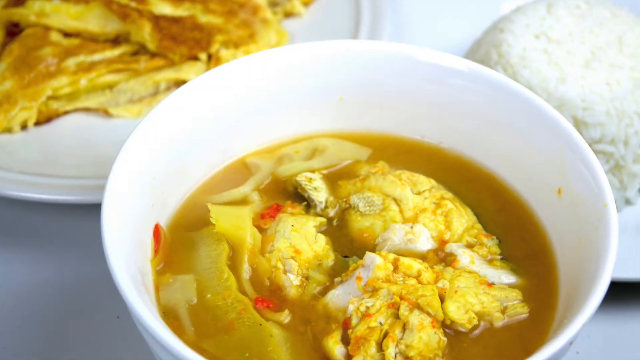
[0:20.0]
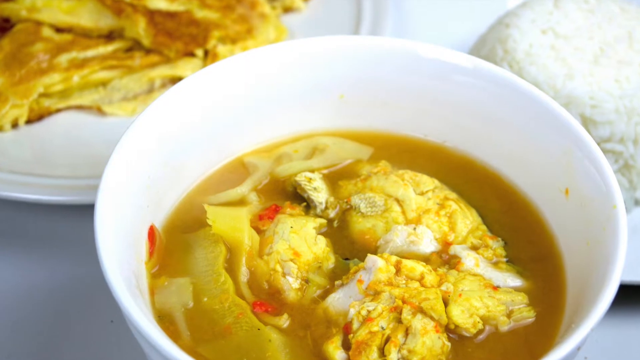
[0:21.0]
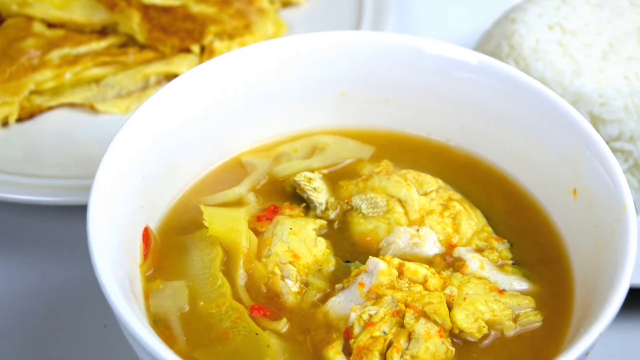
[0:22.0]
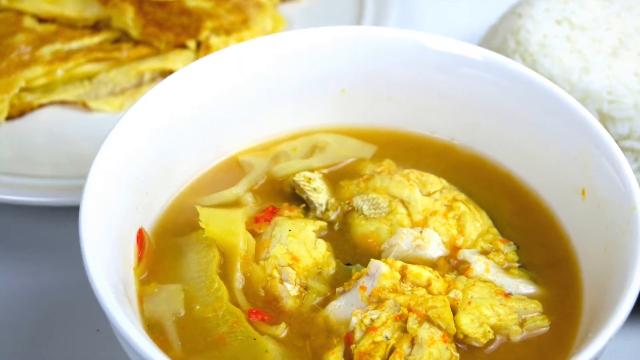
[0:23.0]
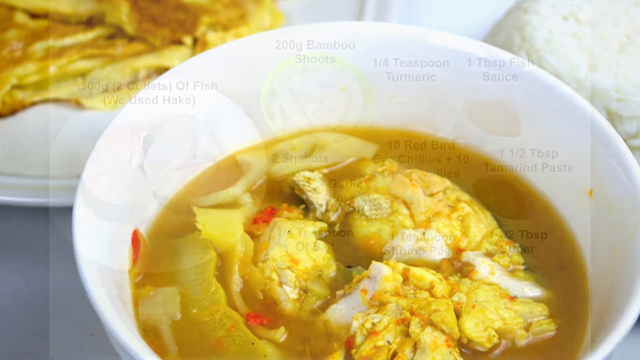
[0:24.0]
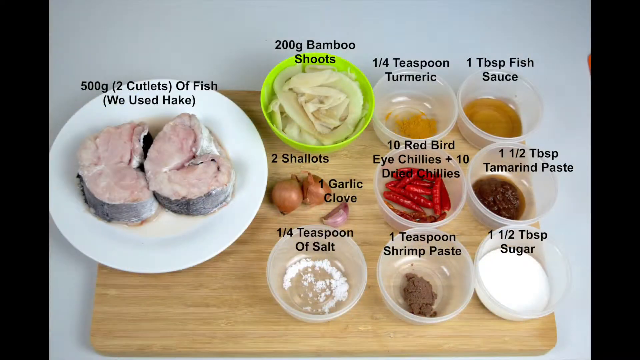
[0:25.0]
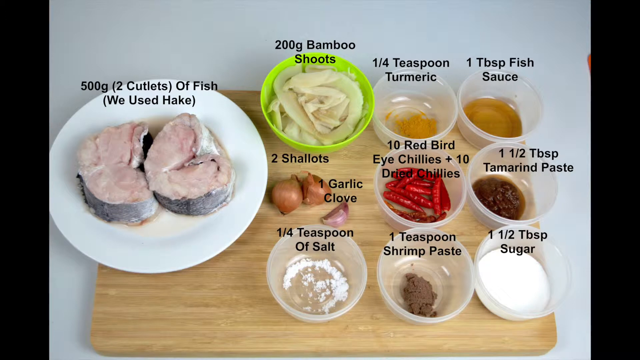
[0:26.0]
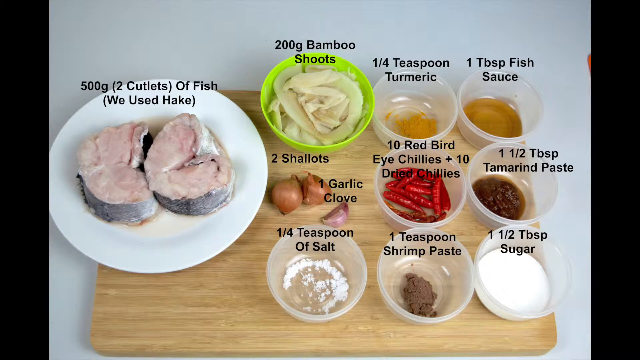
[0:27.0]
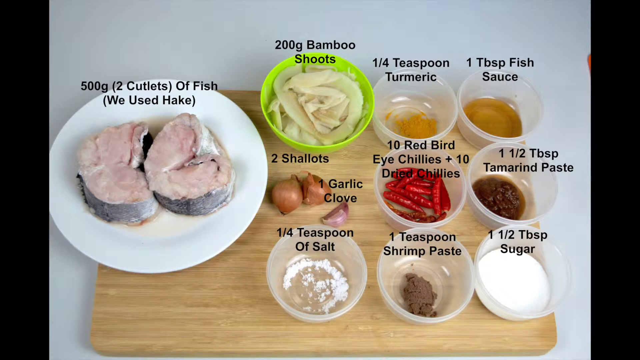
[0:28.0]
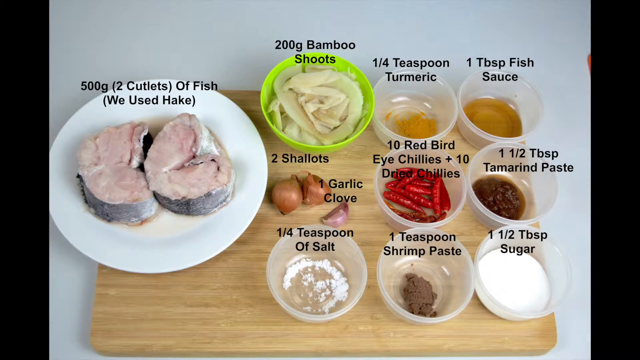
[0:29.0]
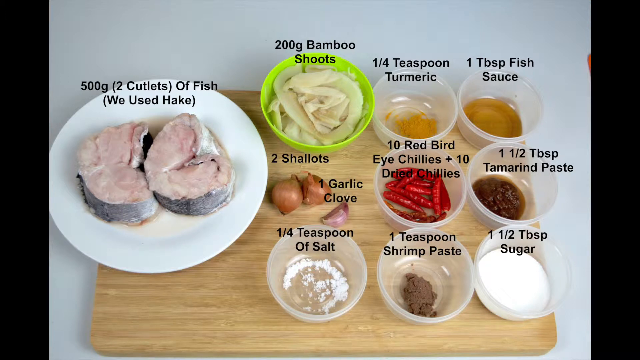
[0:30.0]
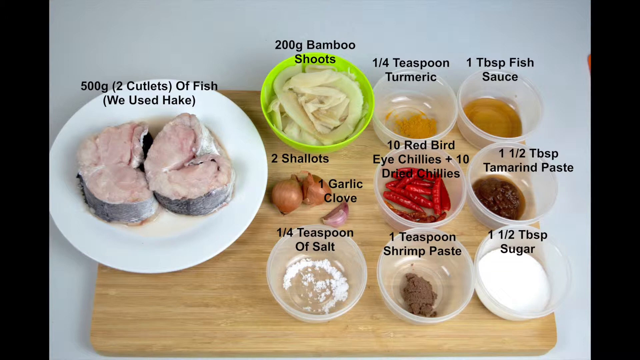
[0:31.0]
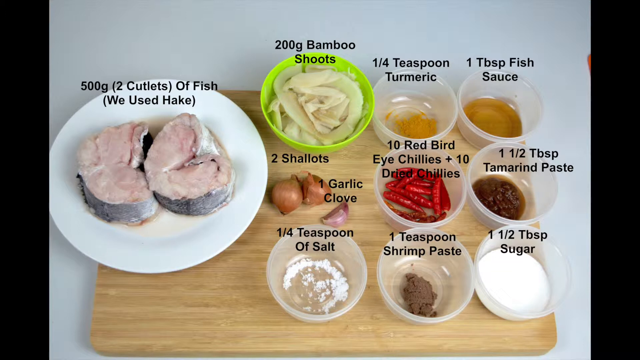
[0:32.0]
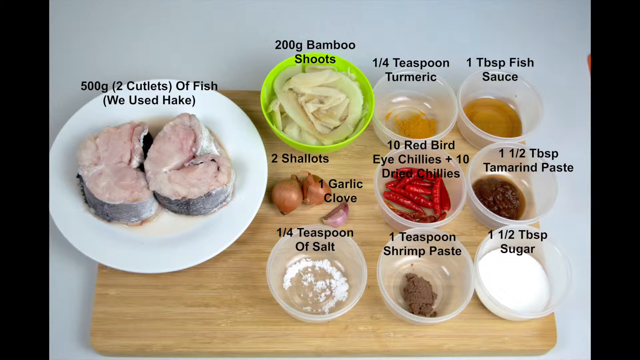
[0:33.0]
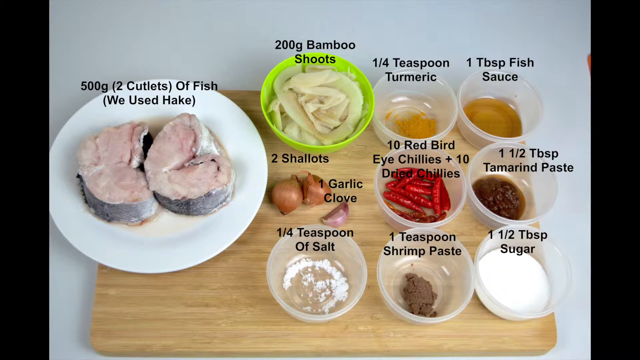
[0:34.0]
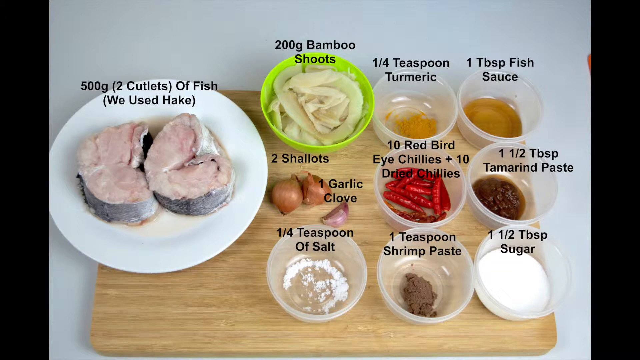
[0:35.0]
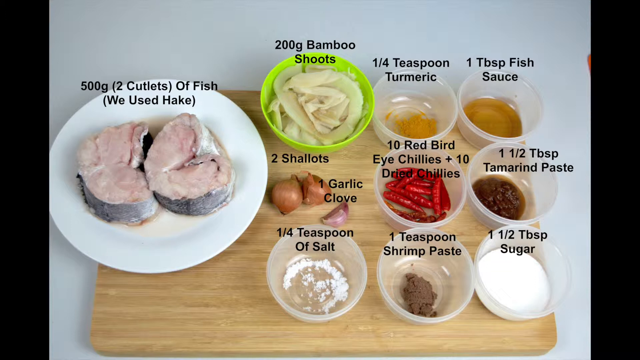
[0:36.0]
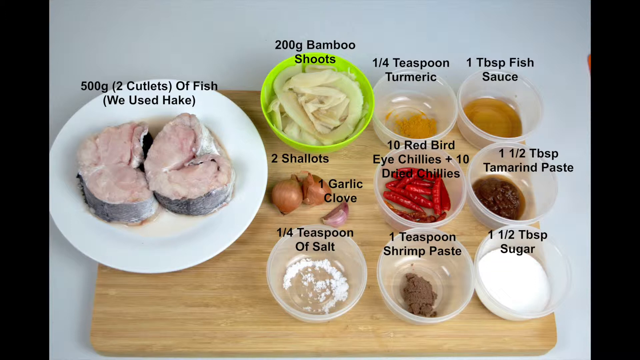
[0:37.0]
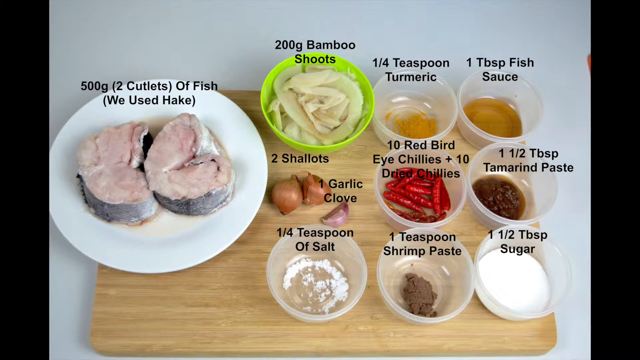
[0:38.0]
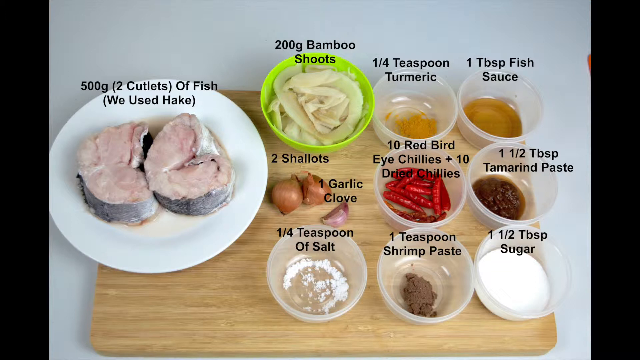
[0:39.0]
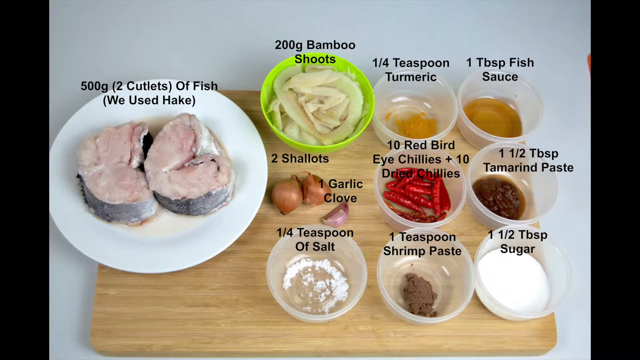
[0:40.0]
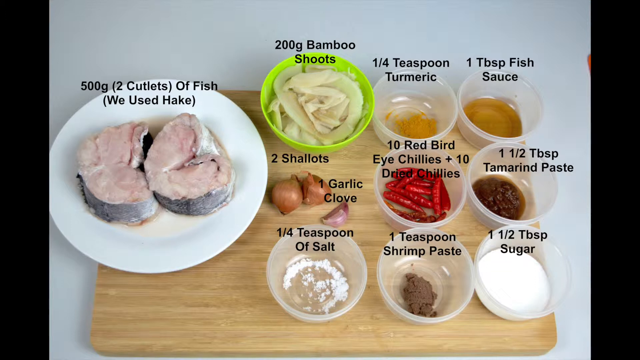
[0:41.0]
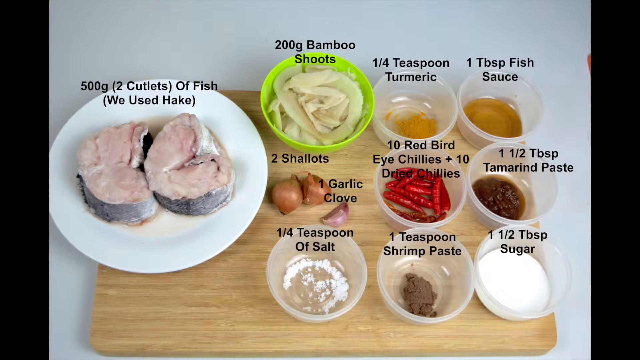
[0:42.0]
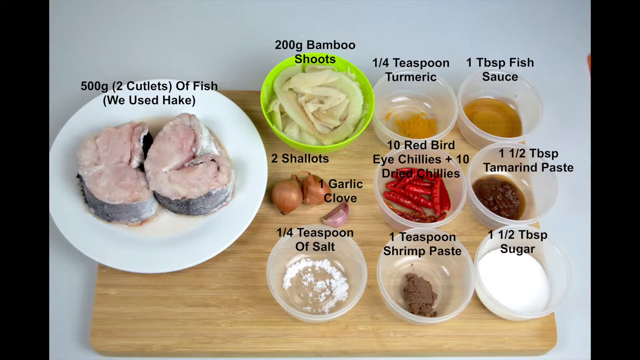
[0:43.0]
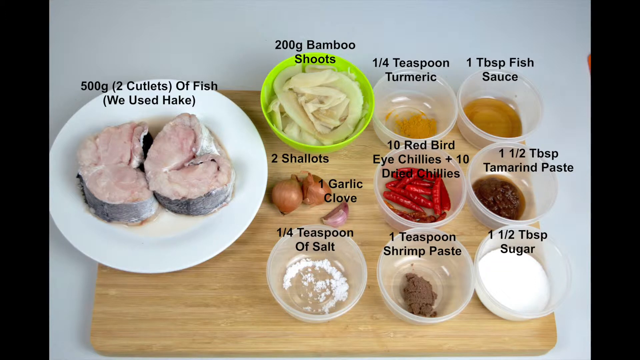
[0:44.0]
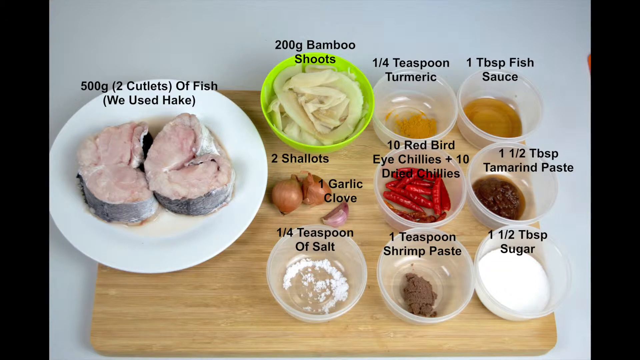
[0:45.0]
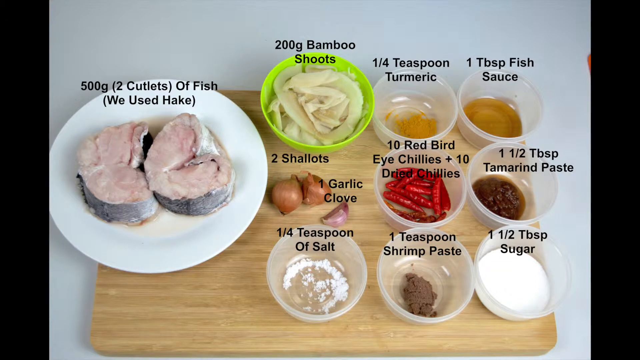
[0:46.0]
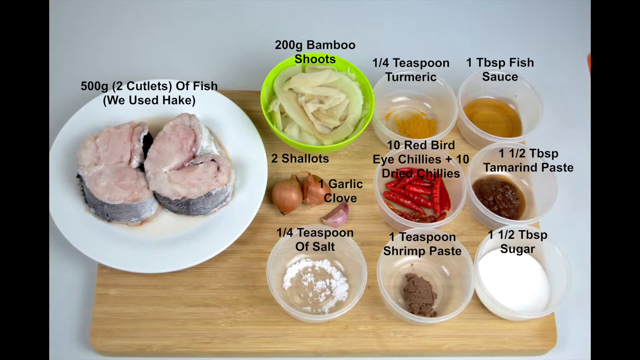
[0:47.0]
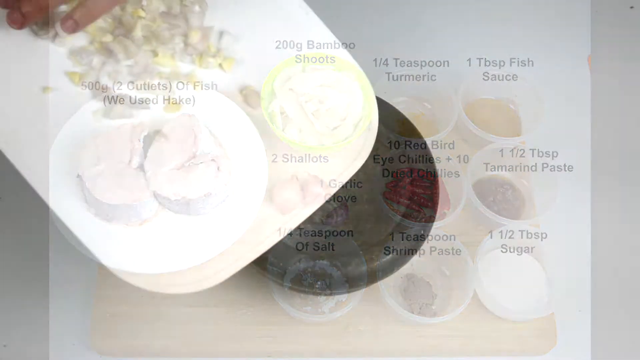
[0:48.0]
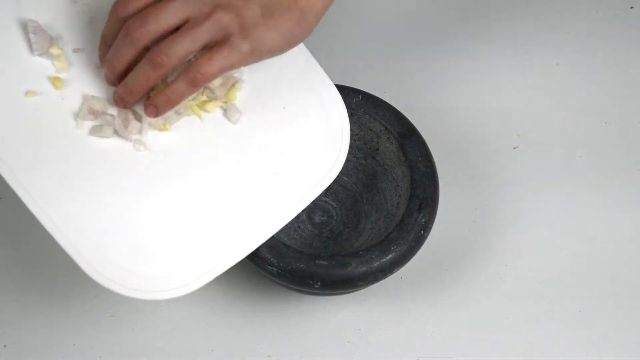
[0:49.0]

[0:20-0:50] A white bowl holds a soup full of cooked meat, a cooked stew that is golden brown. Next to the bowl is rice shaped in a square or cyclic shape, and next to that are golden brown cookies. The next screen shows the ingredients used to cook the stew: 500 grams of fish, 200 grams of bamboo shoots, a teaspoon of turmeric, one teaspoon of fish sauce, one teaspoon of turmeric paste, a chili, a red bell pepper, 10 dried chilies, one teaspoon of shrimp paste, a teaspoon of sugar, a teaspoon of salt, a garlic clove and shallots. Each ingredient is placed in its own container; the fish is on a plate, and the others are in different containers of the same color.